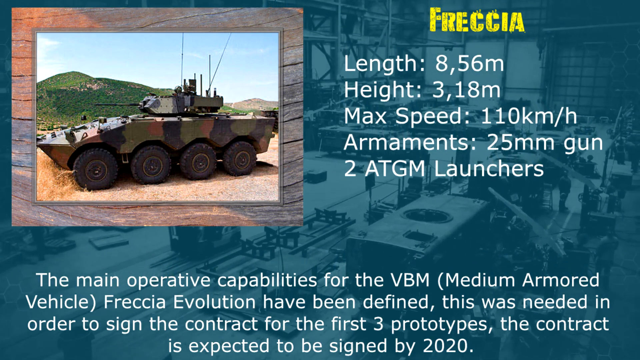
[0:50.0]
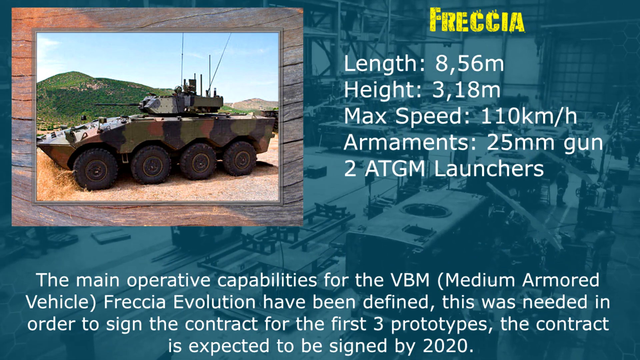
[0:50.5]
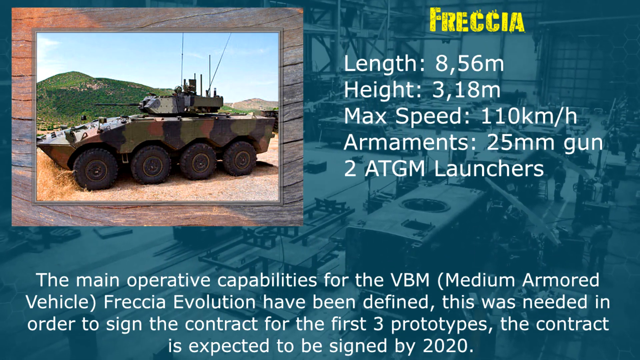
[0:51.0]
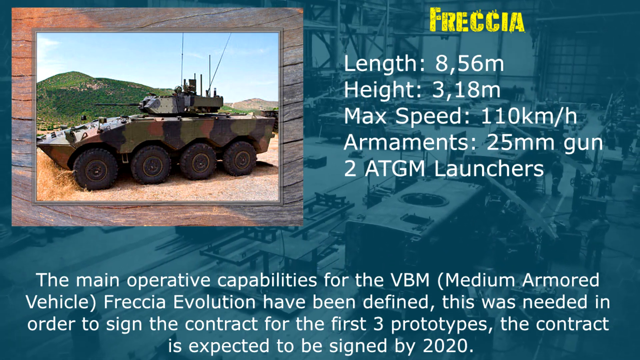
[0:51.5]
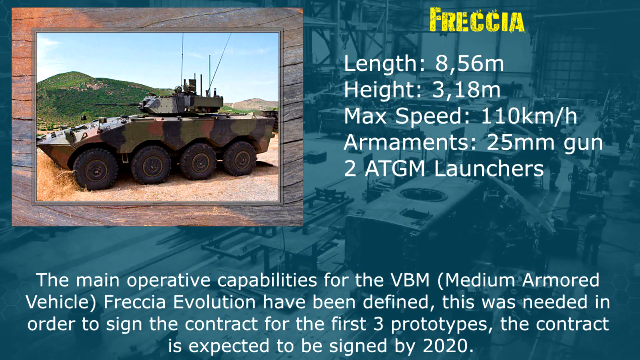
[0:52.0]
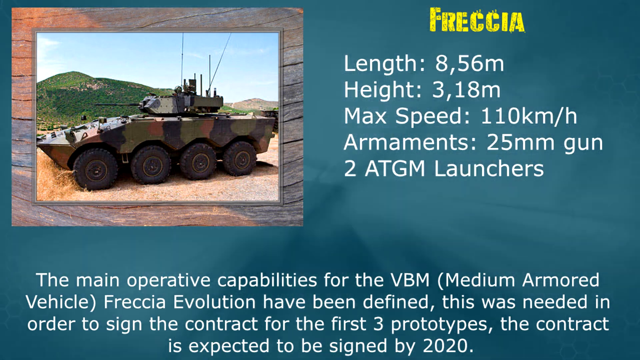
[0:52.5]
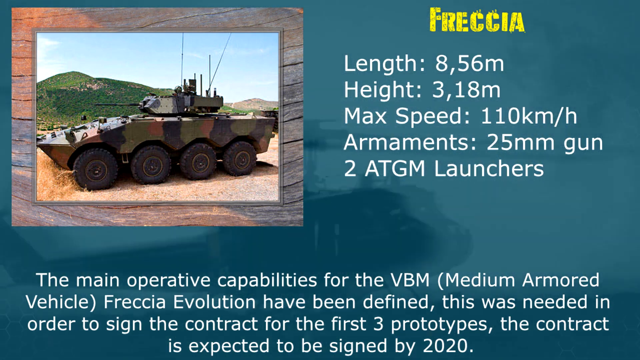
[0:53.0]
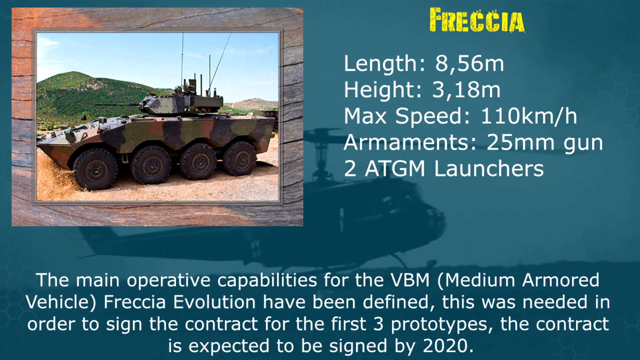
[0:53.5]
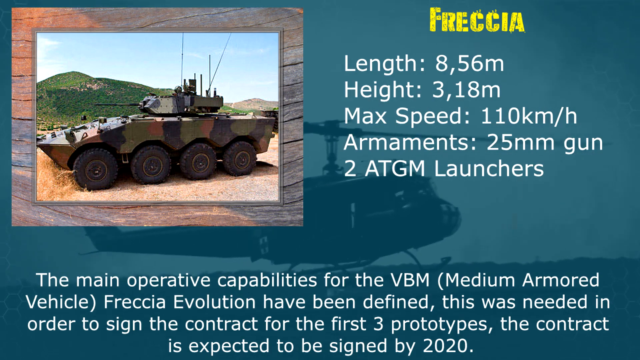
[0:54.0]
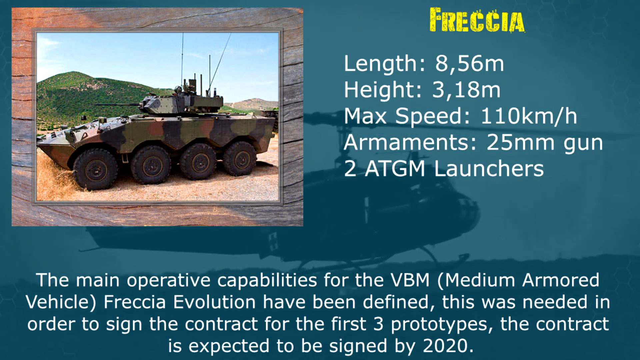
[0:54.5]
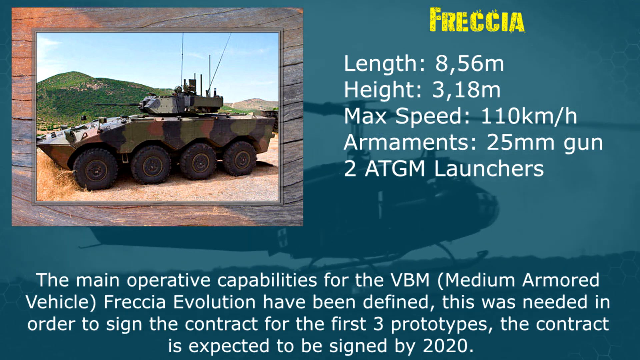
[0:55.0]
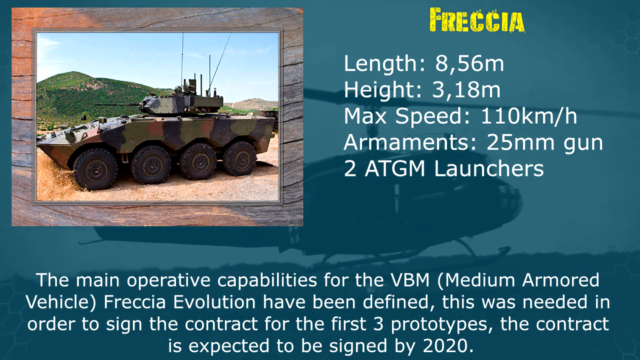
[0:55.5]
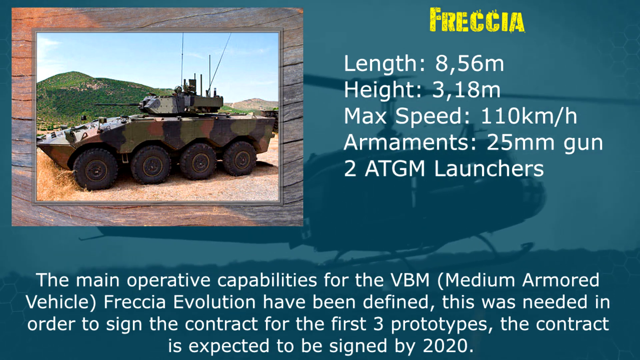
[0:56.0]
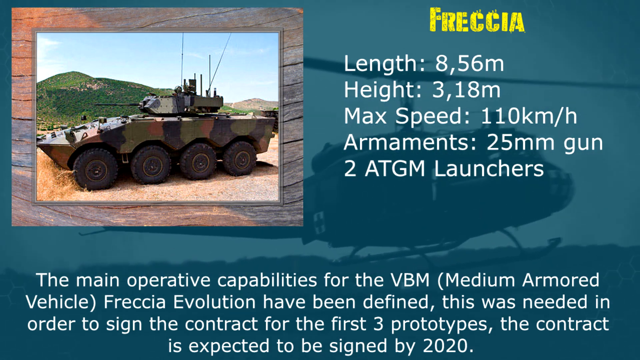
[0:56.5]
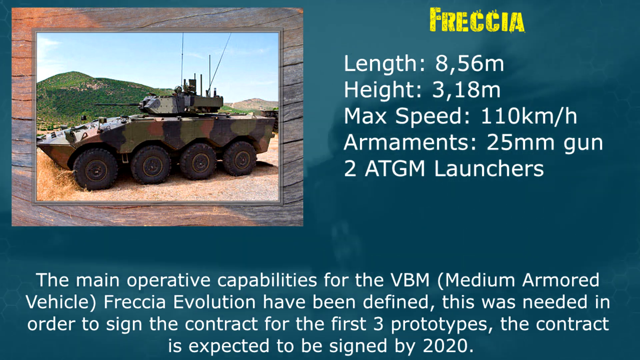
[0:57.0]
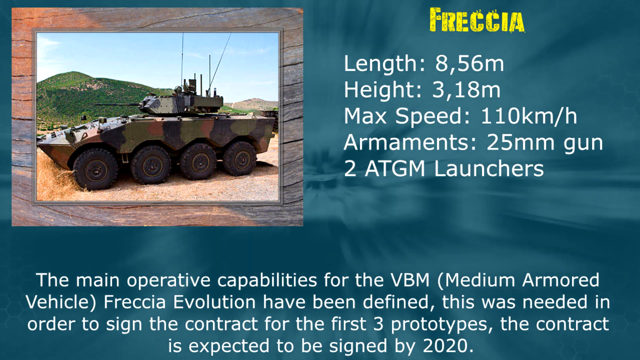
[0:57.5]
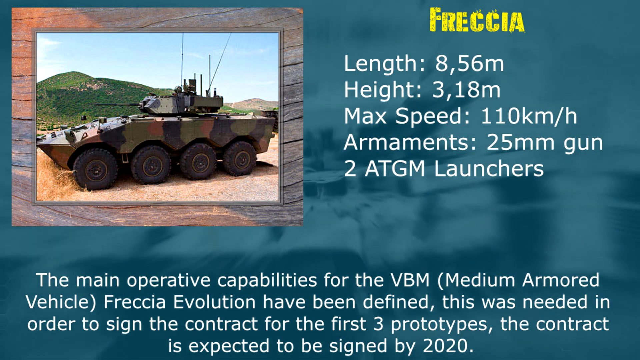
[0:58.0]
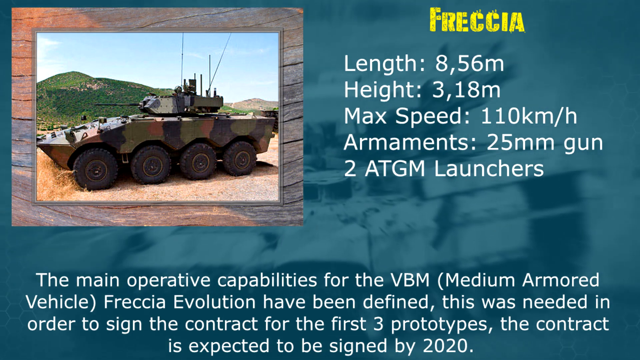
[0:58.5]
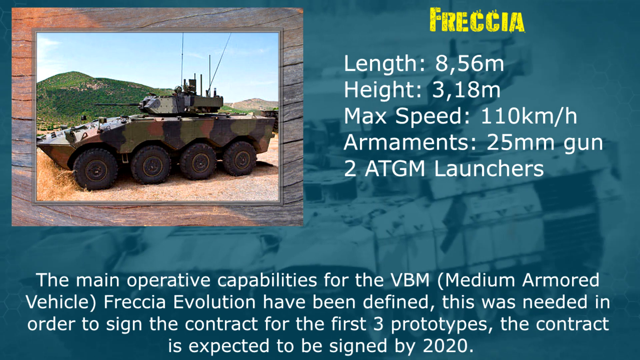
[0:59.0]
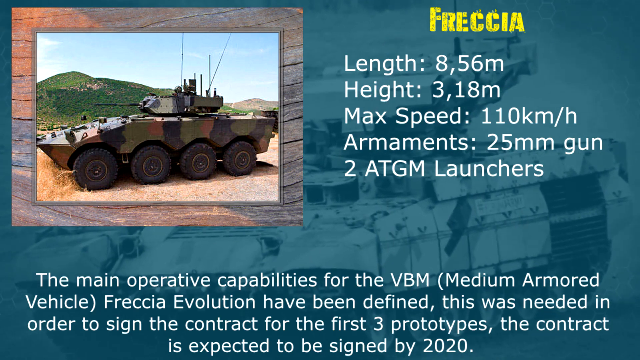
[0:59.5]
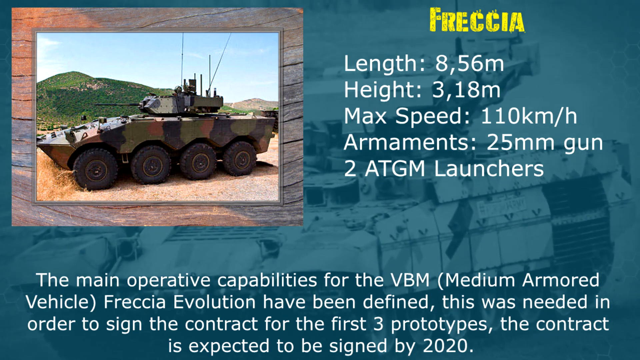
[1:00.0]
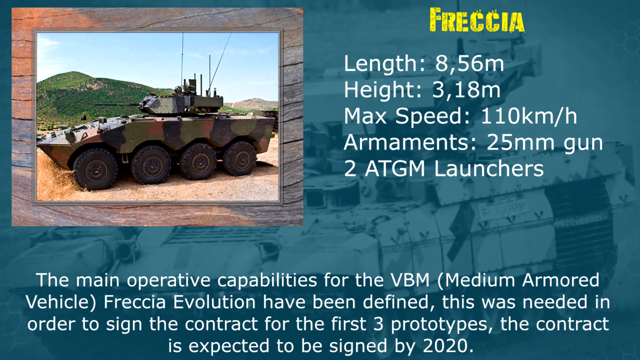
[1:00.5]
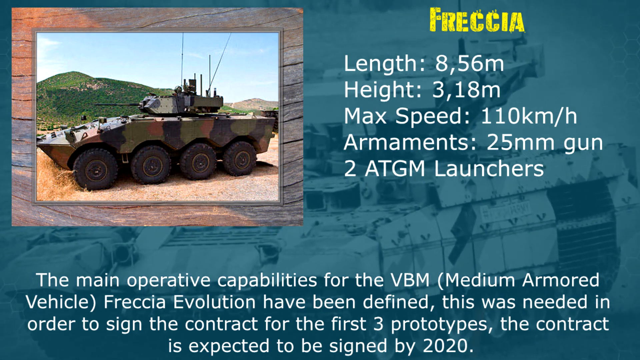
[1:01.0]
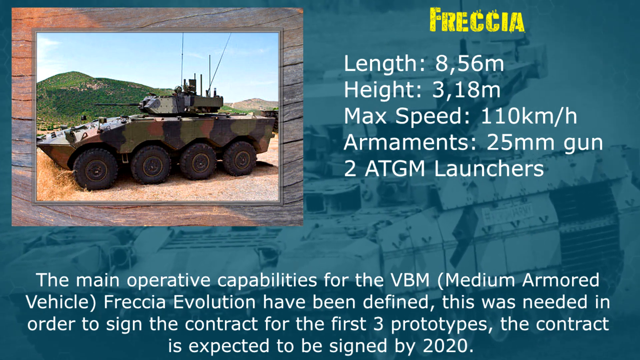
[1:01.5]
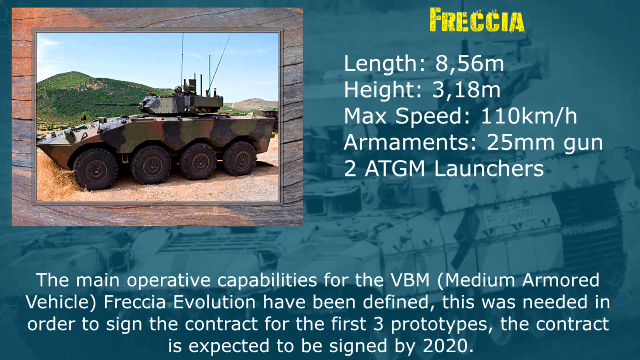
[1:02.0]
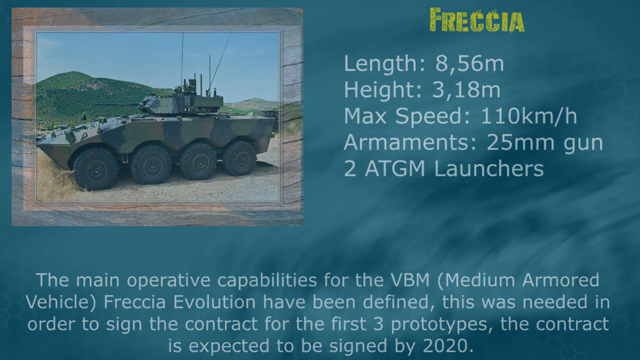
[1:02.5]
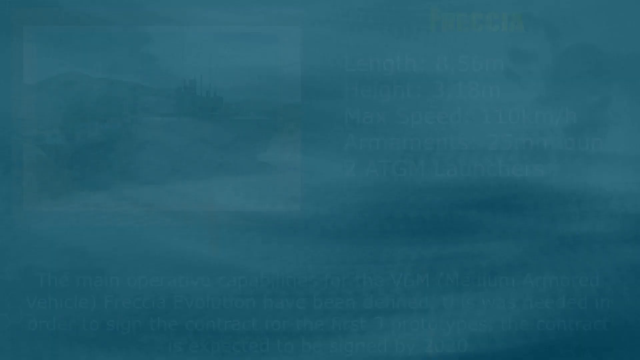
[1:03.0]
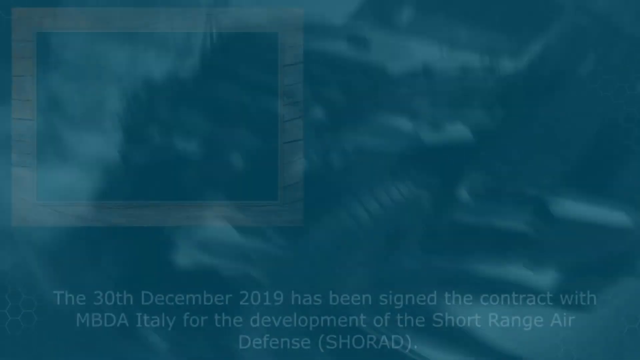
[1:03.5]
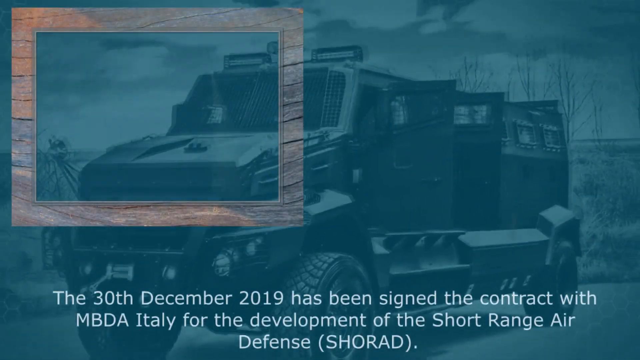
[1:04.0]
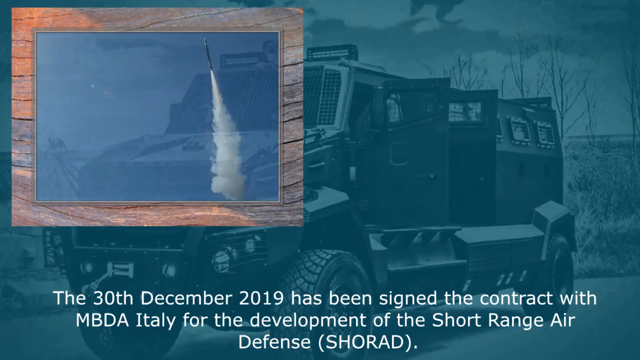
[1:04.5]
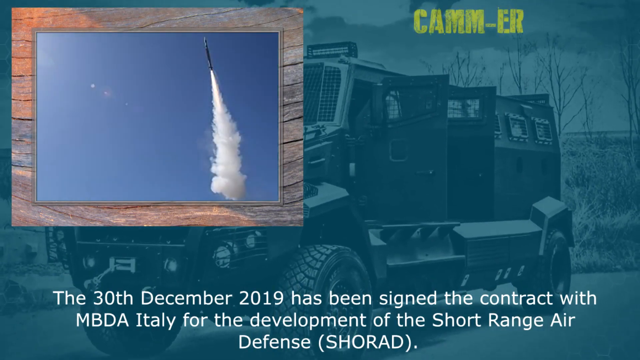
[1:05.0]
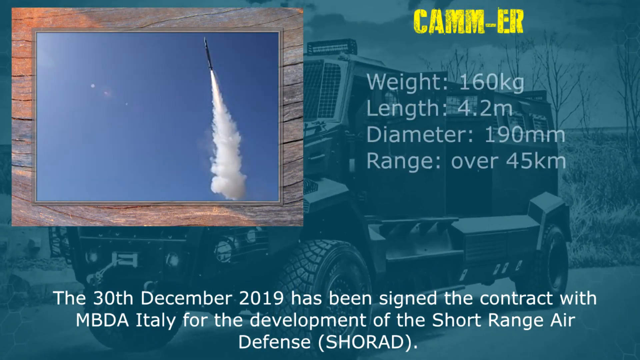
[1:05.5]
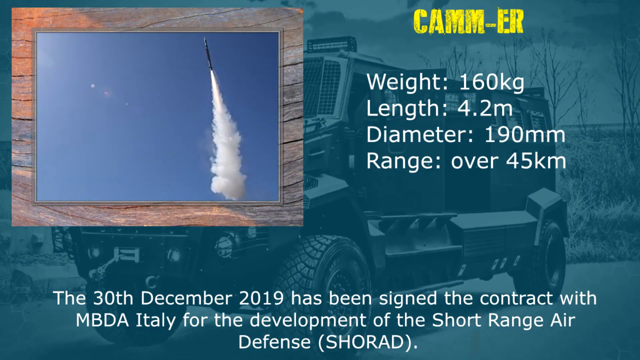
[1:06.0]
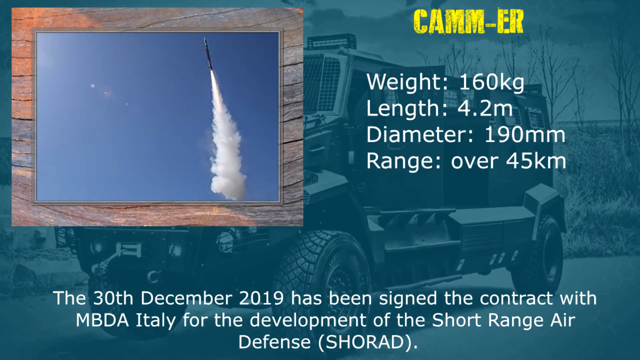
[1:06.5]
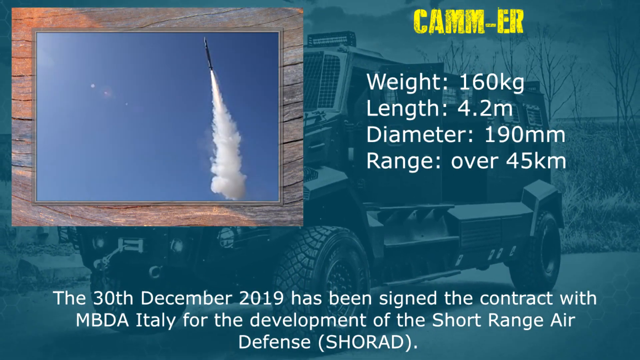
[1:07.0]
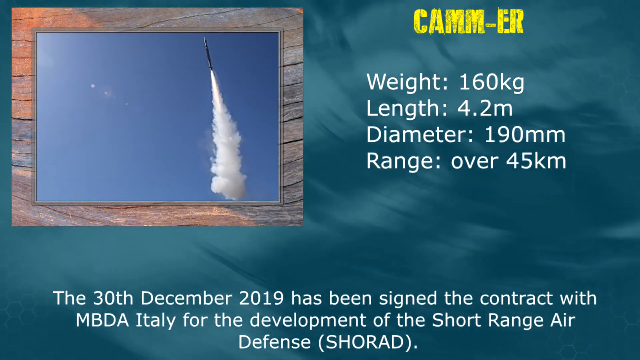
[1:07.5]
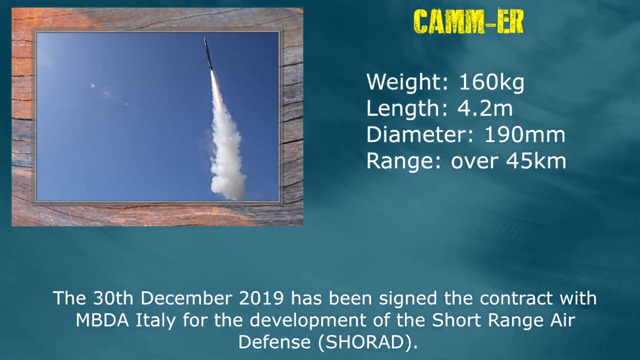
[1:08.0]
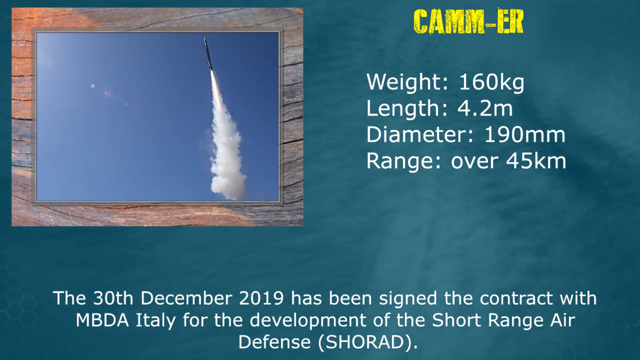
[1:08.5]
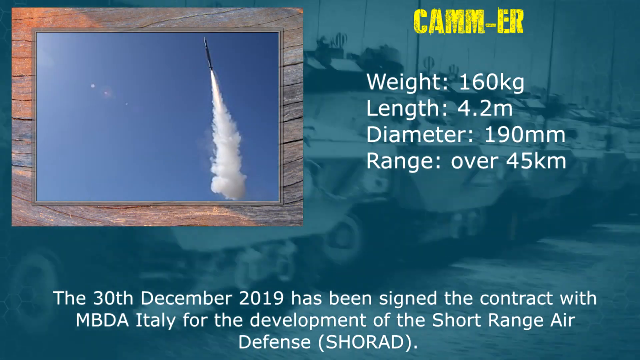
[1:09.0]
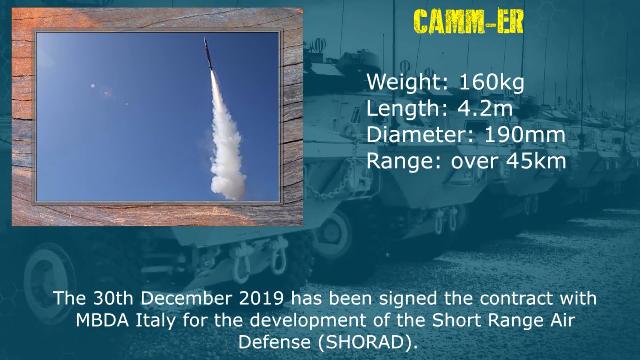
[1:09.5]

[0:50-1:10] A colorful picture of a camouflaged army tank is in the upper left corner, on a dark blue background. At the top, "Freccia" is written in yellow, and below it length, height, max speed and armaments are listed, each with something beside it. White writing with more detail is at the bottom. The background pictures seem to change from helicopters to tanks, and then to a large tank in the back, while the square picture becomes what looks like a rocket taking off. The yellow writing at the top reads "Camm-er", and weight, length, diameter and range are listed with details beside them. White writing again appears at the bottom of the image.